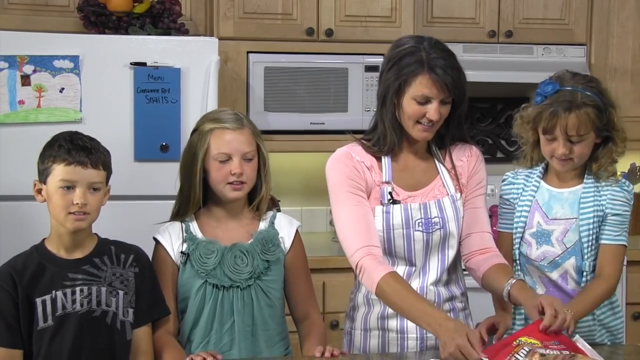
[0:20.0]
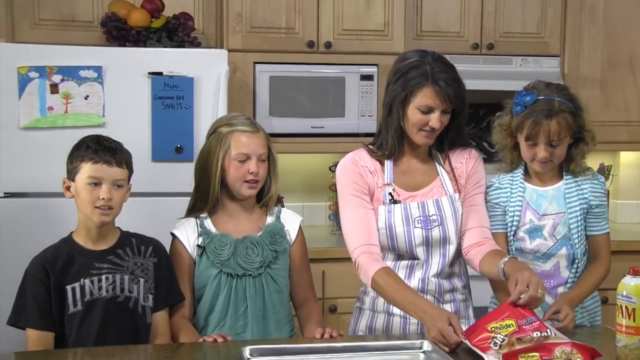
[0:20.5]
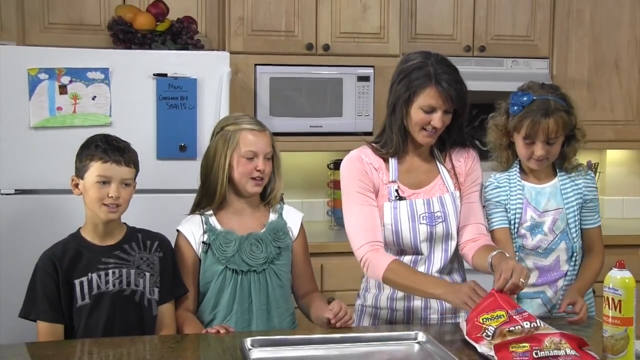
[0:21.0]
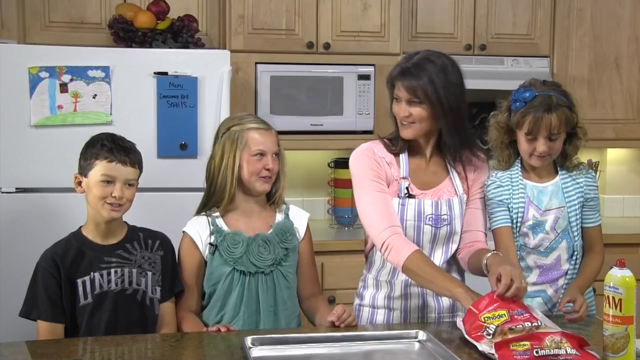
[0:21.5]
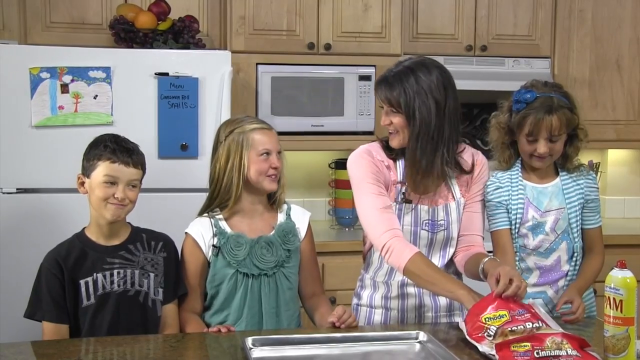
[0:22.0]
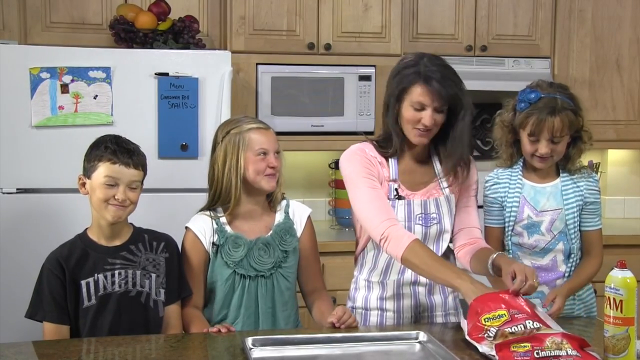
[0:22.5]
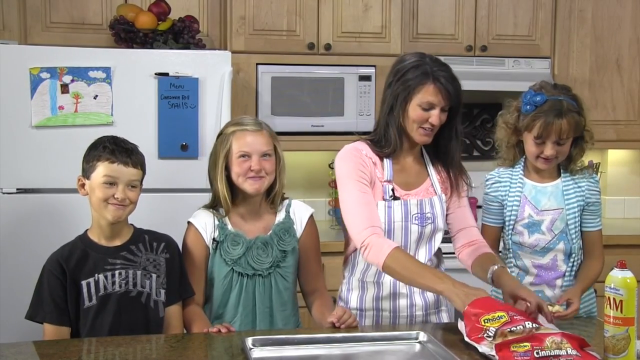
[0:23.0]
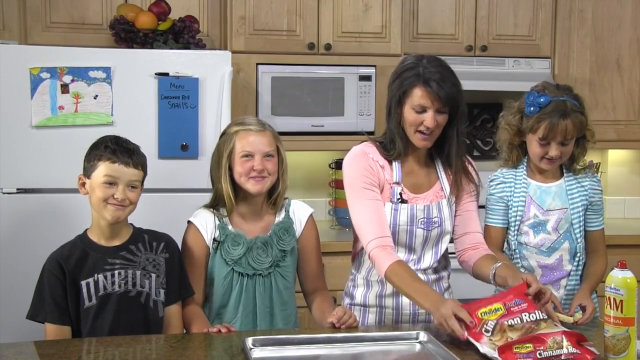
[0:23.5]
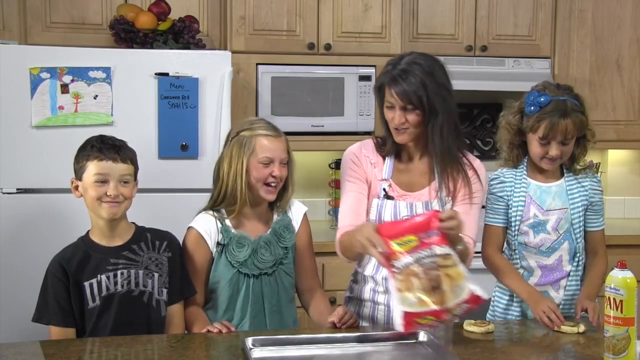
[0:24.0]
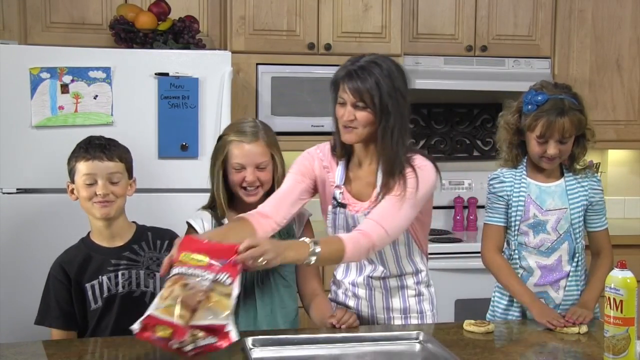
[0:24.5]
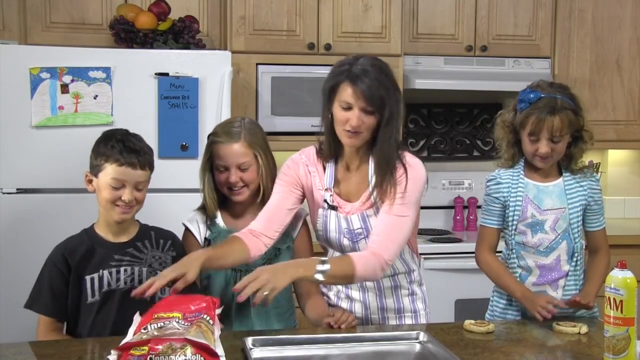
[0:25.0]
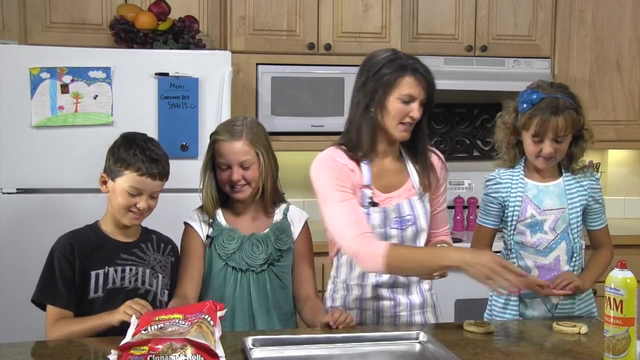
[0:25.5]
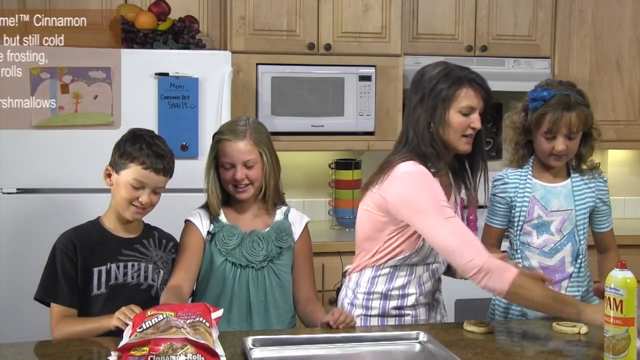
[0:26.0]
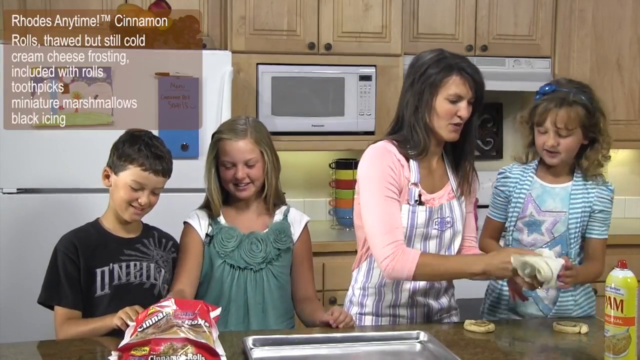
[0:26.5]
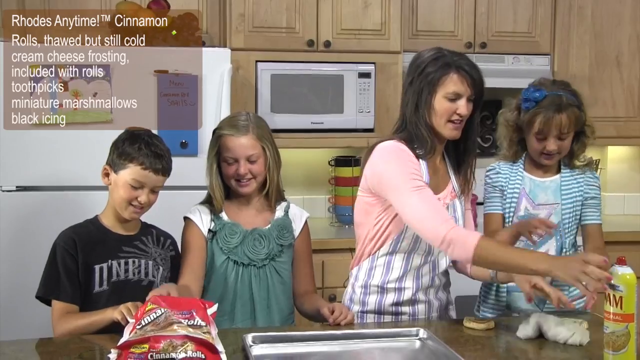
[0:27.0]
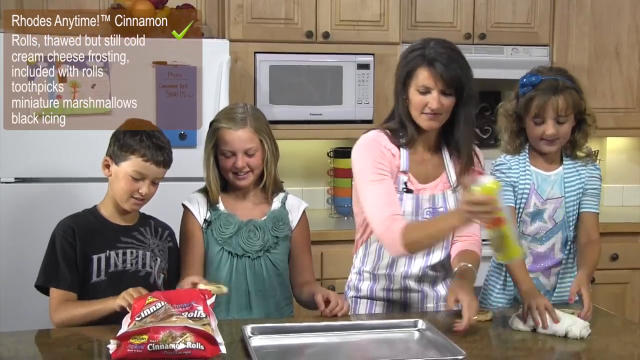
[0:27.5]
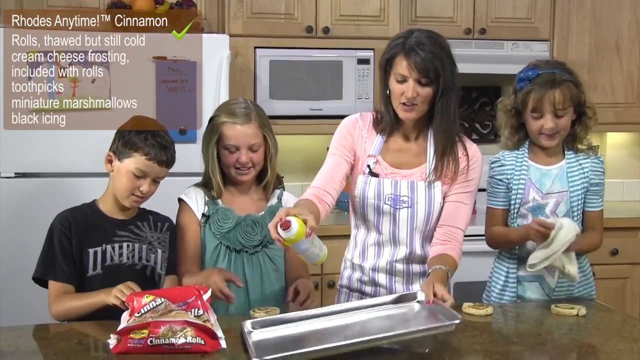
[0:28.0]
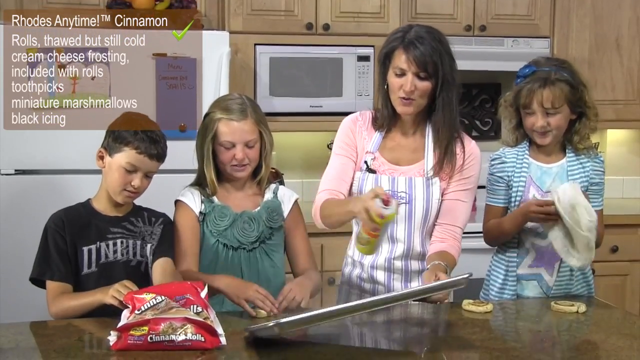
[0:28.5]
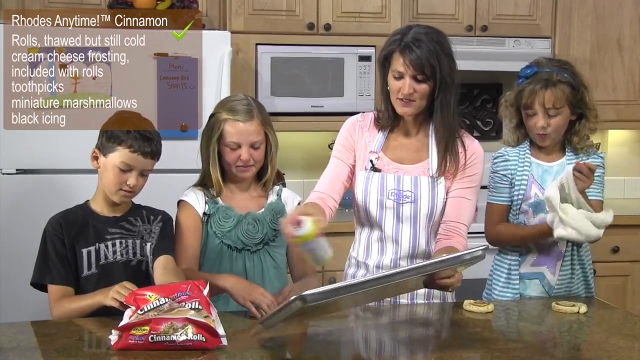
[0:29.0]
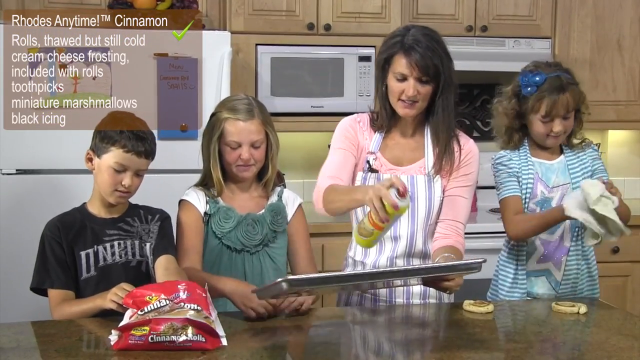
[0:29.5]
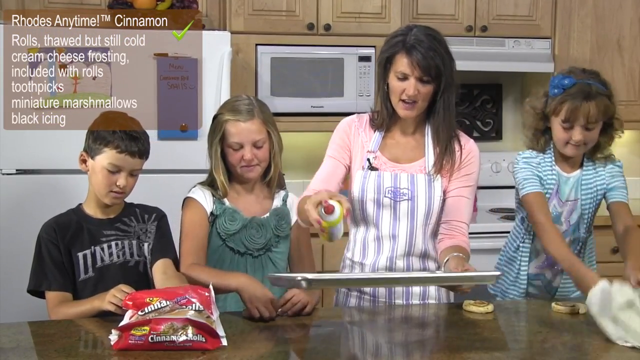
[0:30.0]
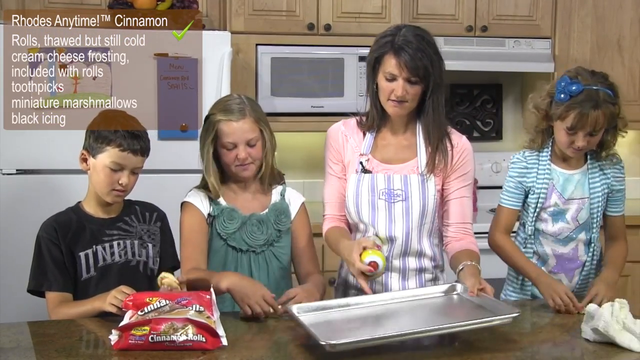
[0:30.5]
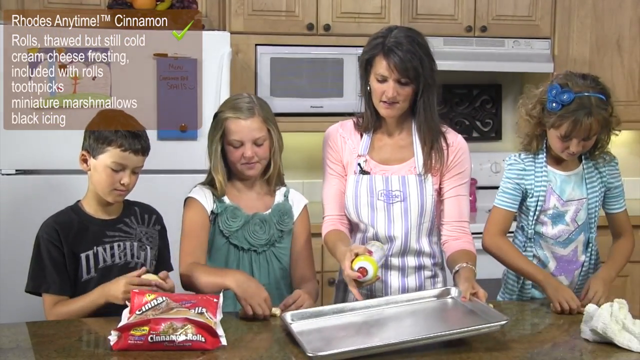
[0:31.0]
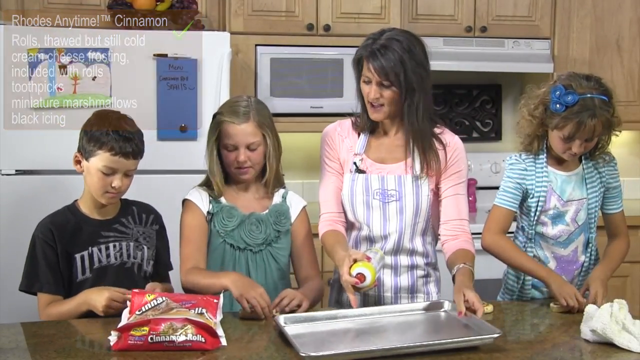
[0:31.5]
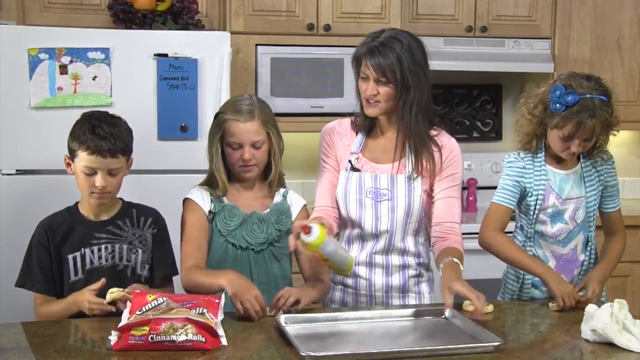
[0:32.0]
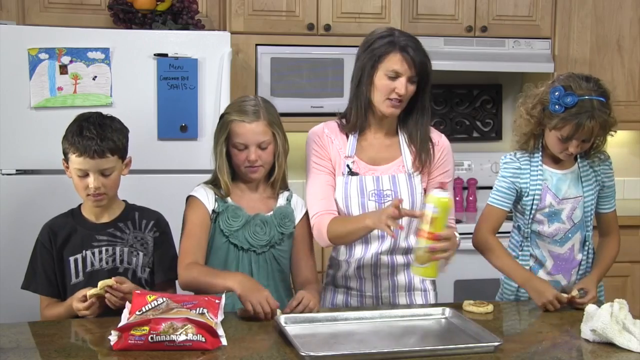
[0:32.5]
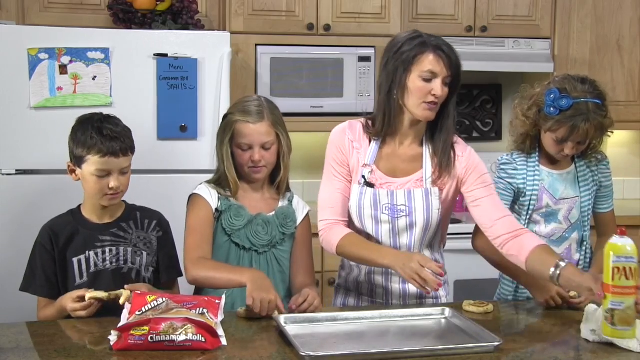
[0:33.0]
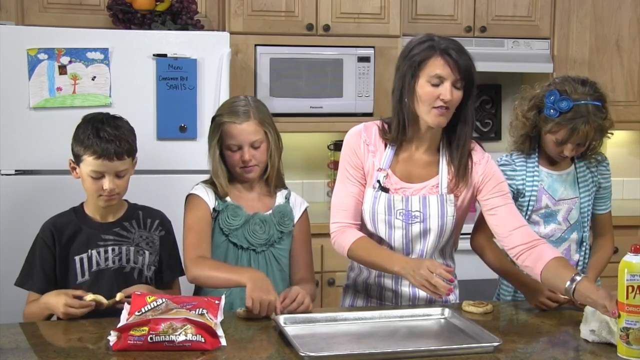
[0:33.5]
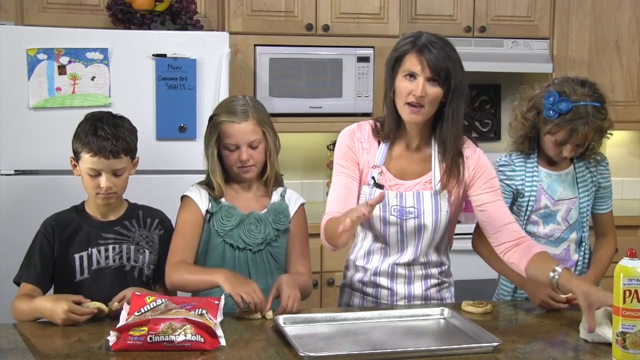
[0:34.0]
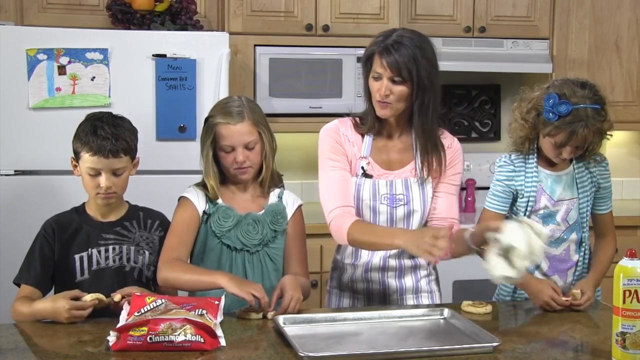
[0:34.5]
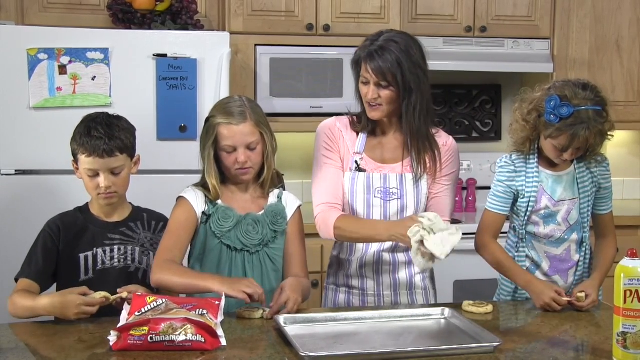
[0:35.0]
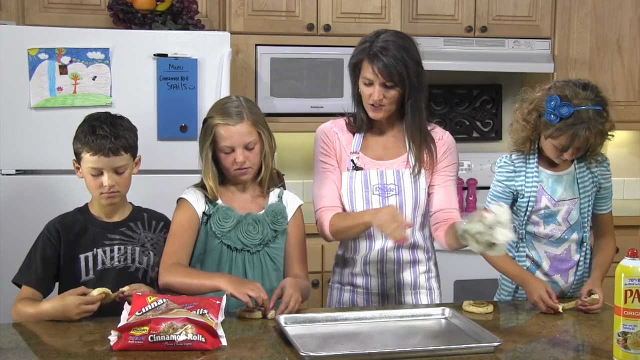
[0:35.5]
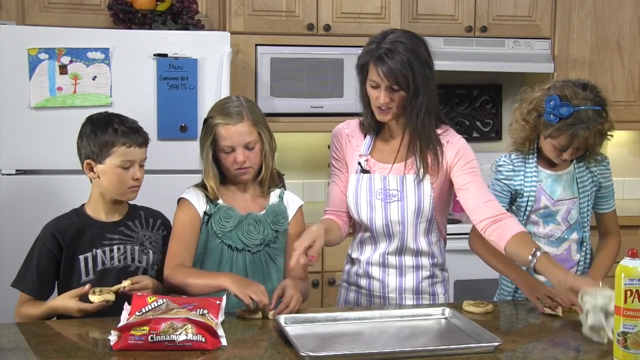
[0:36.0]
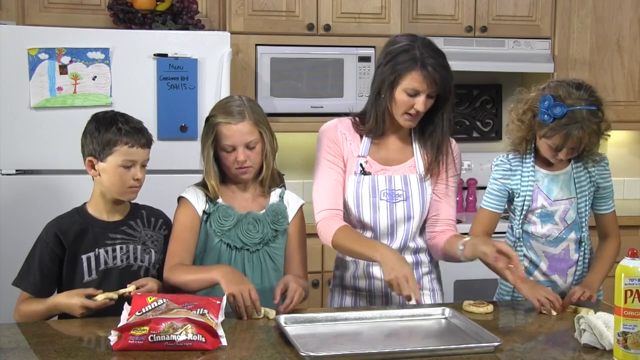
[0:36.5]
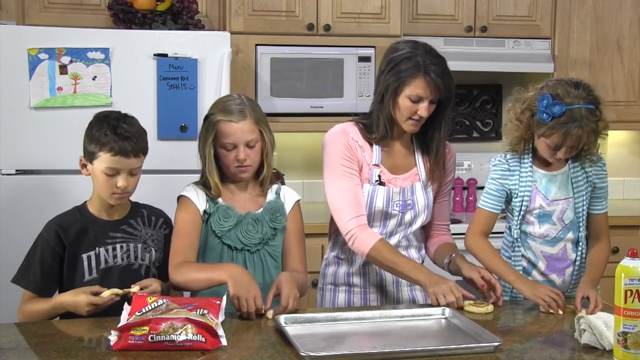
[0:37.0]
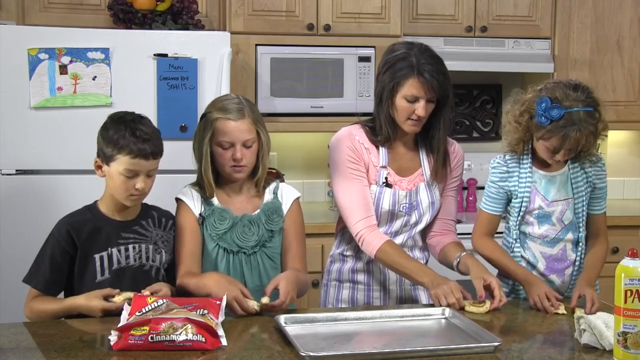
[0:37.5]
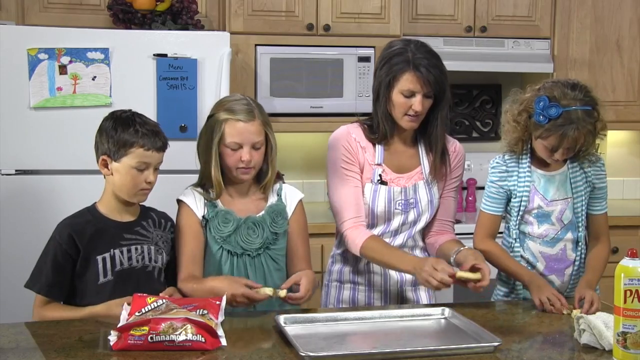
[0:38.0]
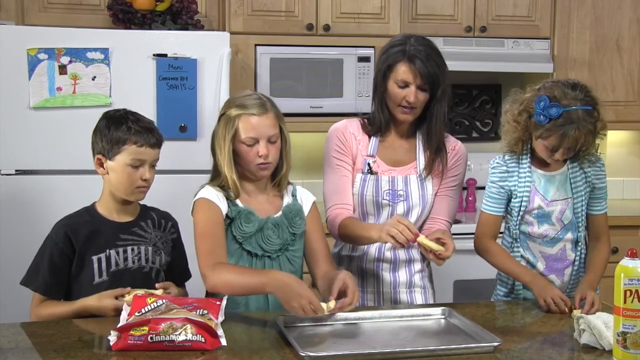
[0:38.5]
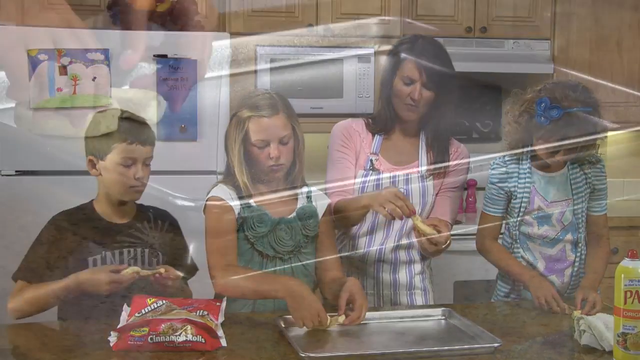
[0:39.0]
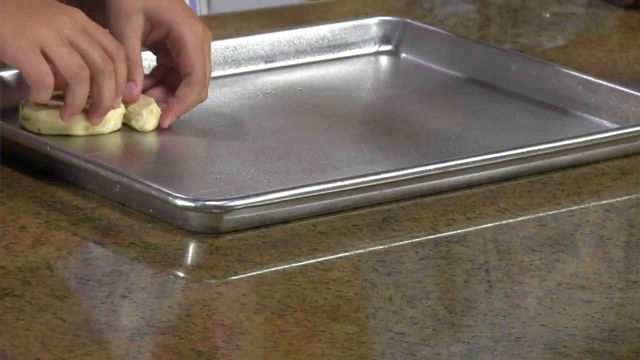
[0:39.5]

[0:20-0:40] A family of females and one male appears. A mother wears a pink T-shirt, and what appear to be two daughters stand hand in hand next to her: one in a blue striped T-shirt, the other in a green dress with a white T-shirt underneath. Their brother stands next to the girl in the green dress, wearing a black T-shirt with different drawings on it. The mother holds a bag of what appears to be the frozen cinnamon rolls and passes it to the left, to the girl in the green dress and the boy. In the top left corner a caption reads "rolls anytime" and lists cream cheese frosting included with rolls, toothpicks, marshmallows and black icing. She sprays something on top of the silver oven cooker, wipes her hands, then picks up a cinnamon roll and places it on top of the cooking pan.